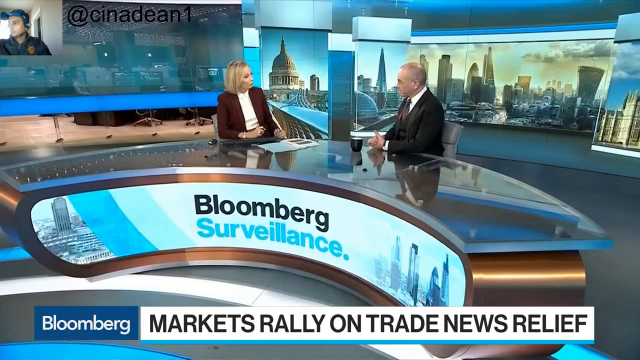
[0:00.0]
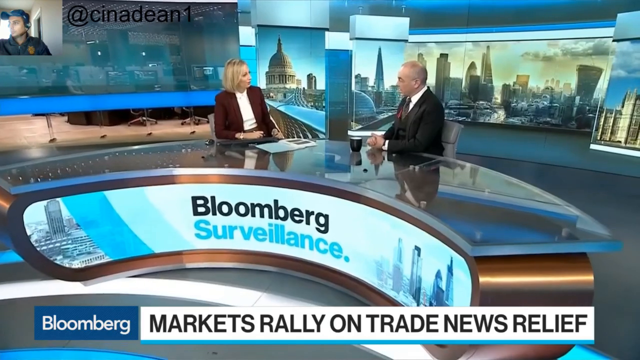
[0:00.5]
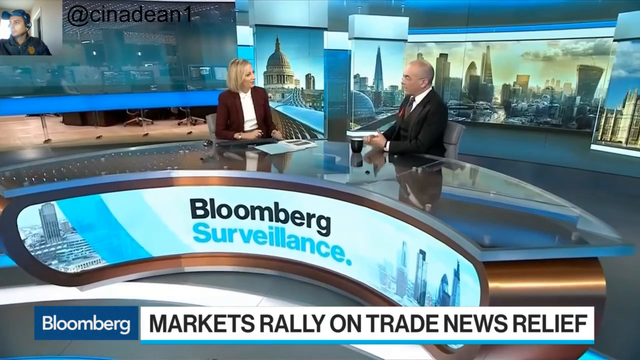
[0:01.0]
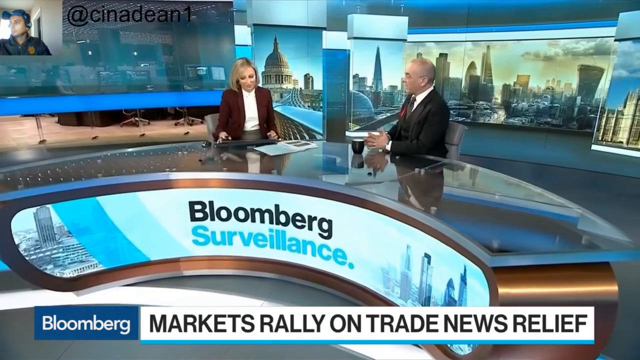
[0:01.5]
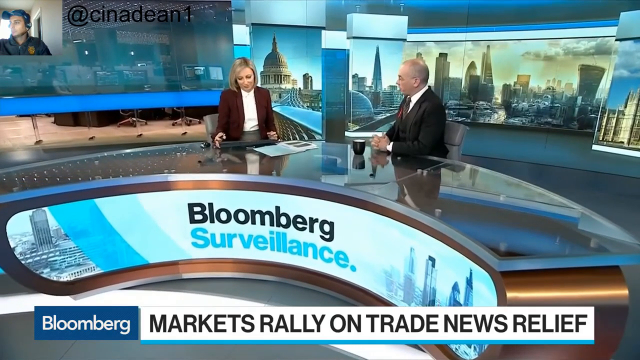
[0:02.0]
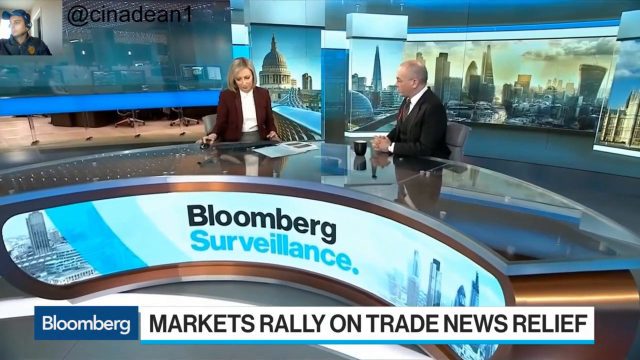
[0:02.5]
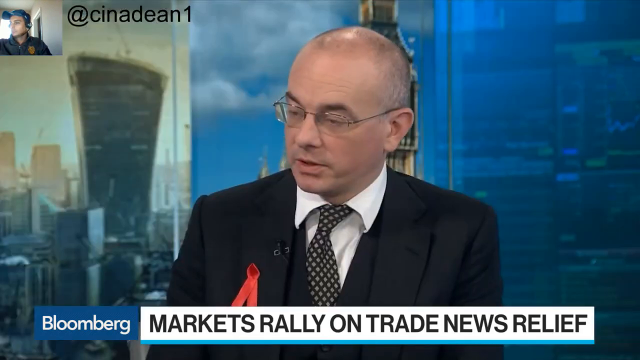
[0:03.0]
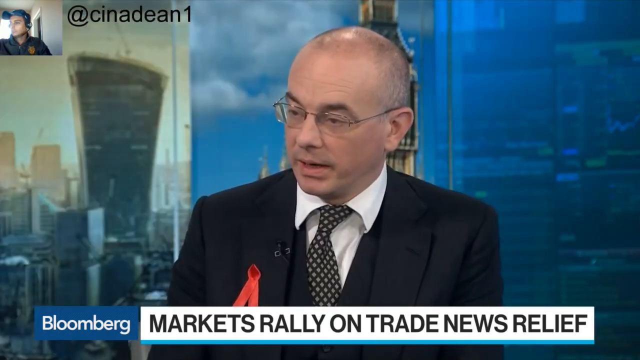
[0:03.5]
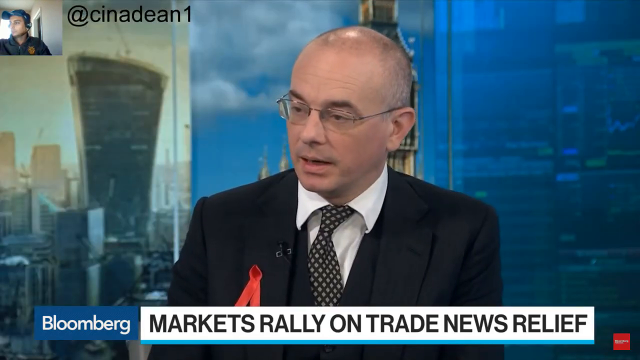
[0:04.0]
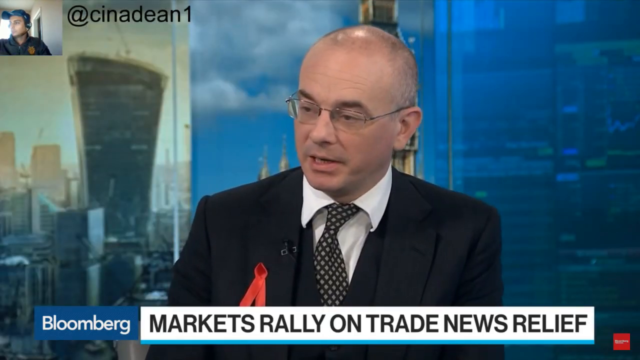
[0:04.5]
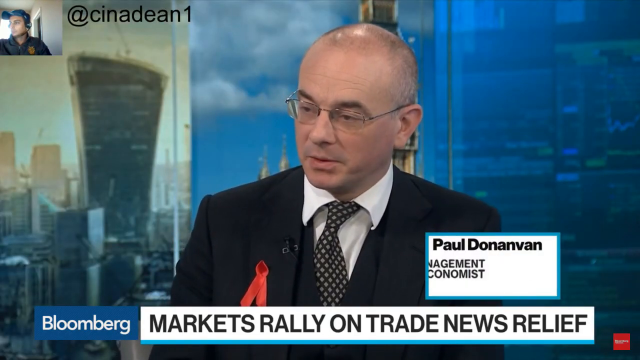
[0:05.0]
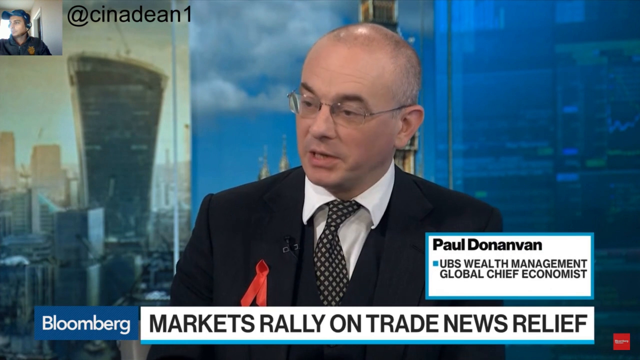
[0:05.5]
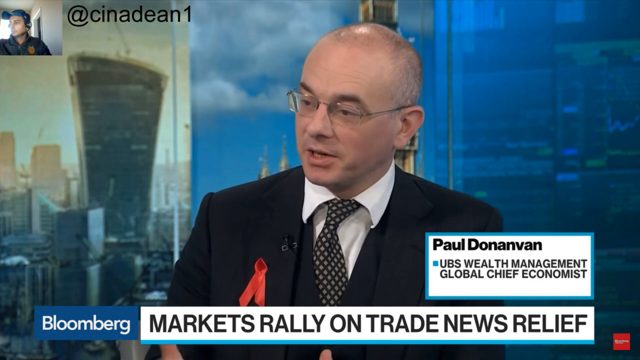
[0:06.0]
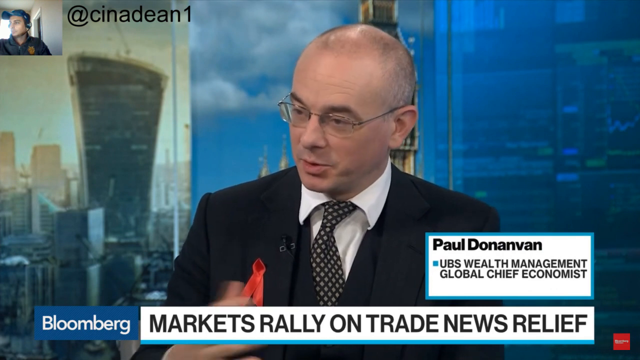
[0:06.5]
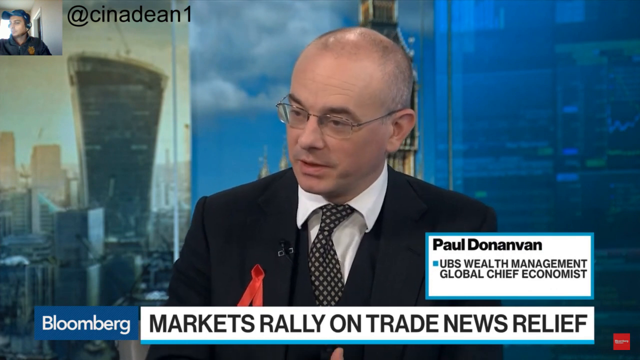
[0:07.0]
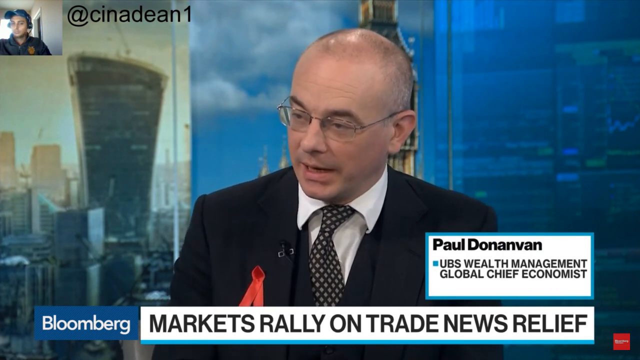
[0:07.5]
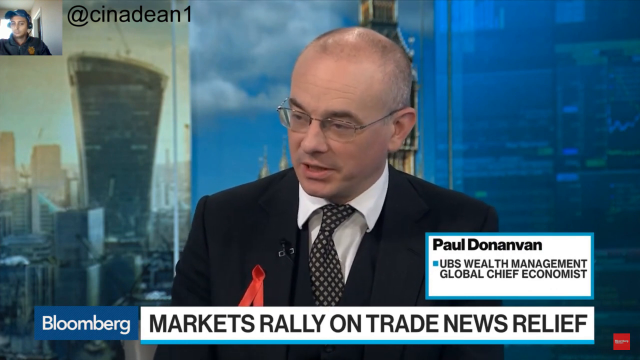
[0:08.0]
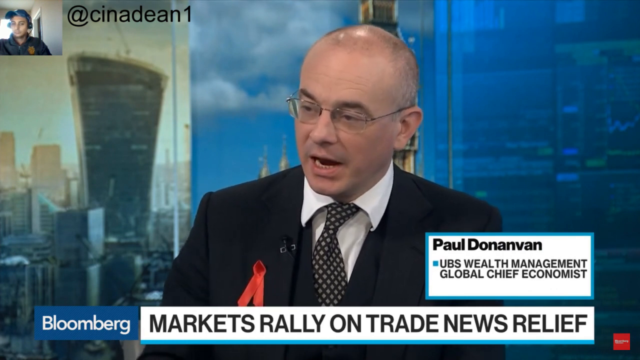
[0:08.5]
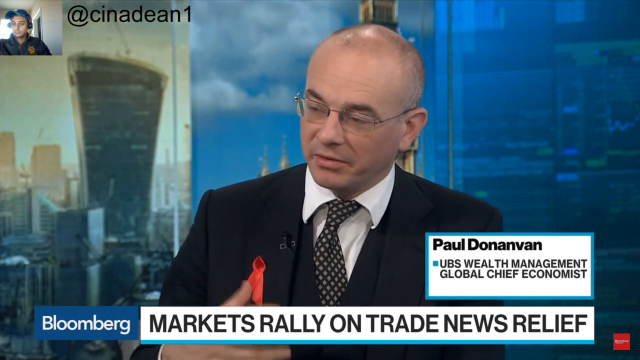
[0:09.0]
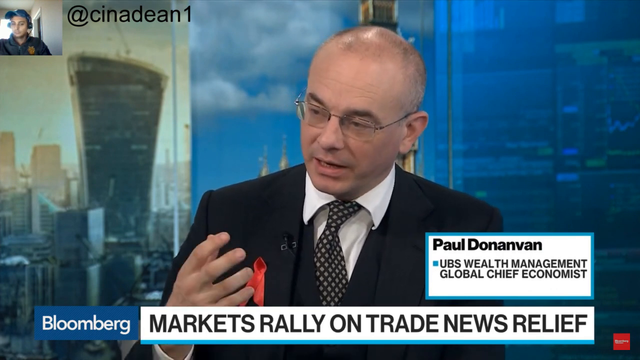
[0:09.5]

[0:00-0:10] The video opens on a couple of news anchors sitting at a big curved desk with a city downtown background; a female anchor is on the left and a male anchor on the right from the viewer's perspective. There is a studio at the top left, and a watermark there reads "at CNEINAEAN1", possibly somebody they are interviewing remotely. On-screen text reads "Bloomberg", and the bottom text probably reads "markets" rally "on trade news relief"; "Bloomberg Surveillance" is also on screen. The two anchors talk, then the shot zooms in on just a man talking, identified as Paul Donovan, wealth management global chief economist, speaking on the topic of the market rally.